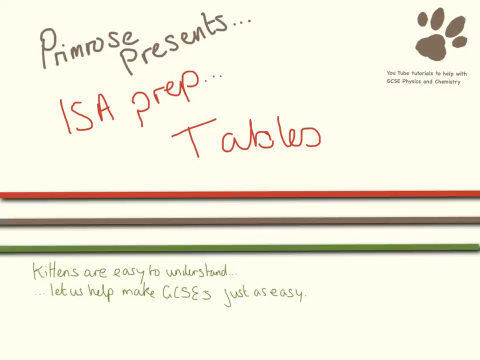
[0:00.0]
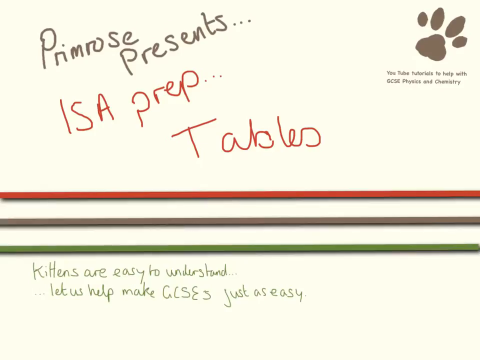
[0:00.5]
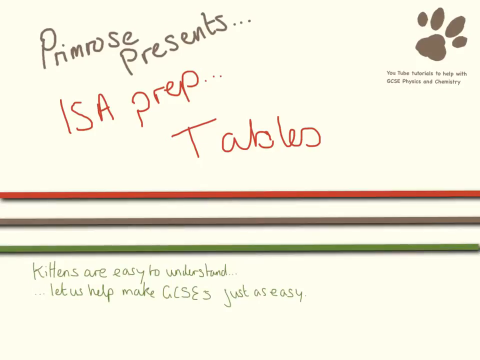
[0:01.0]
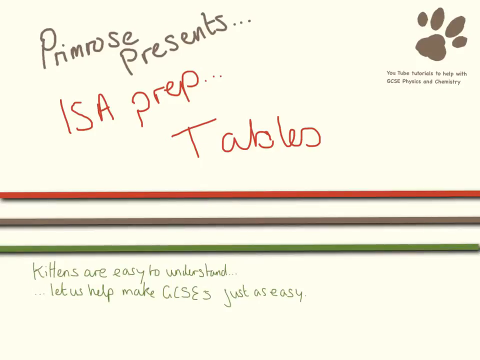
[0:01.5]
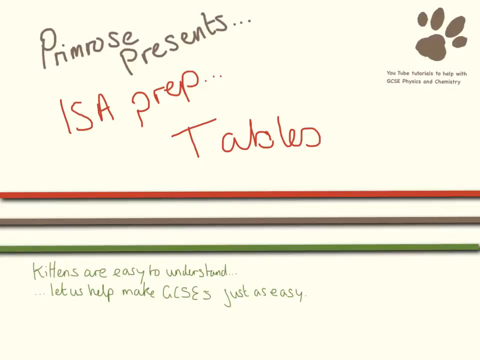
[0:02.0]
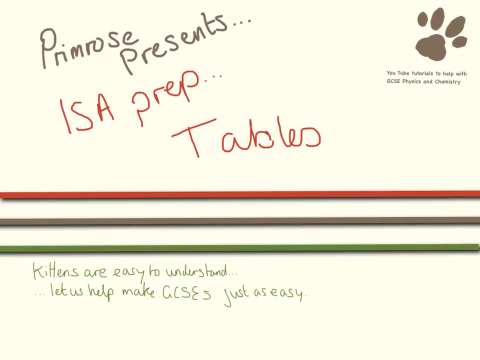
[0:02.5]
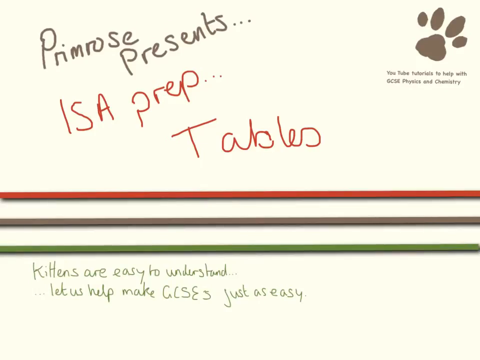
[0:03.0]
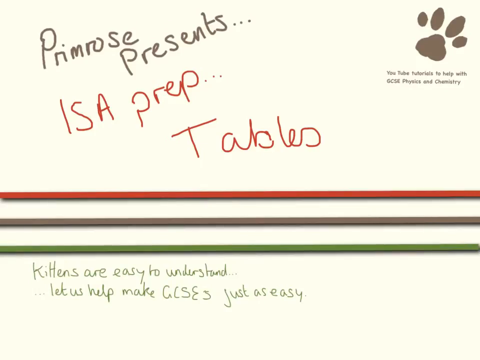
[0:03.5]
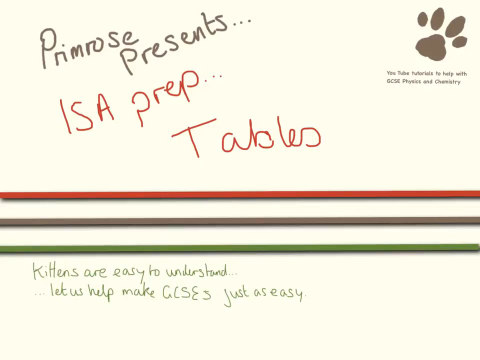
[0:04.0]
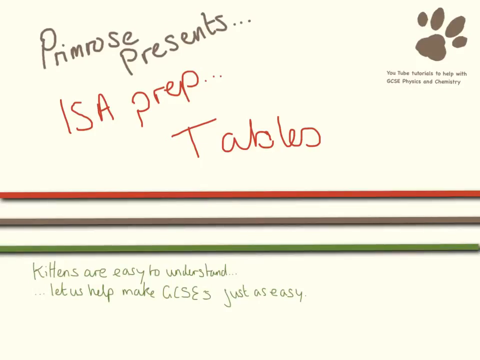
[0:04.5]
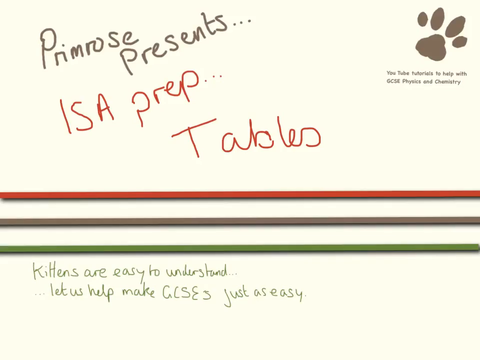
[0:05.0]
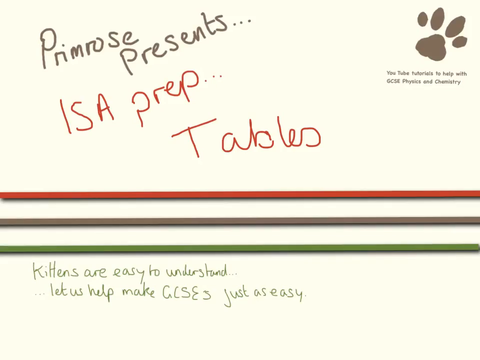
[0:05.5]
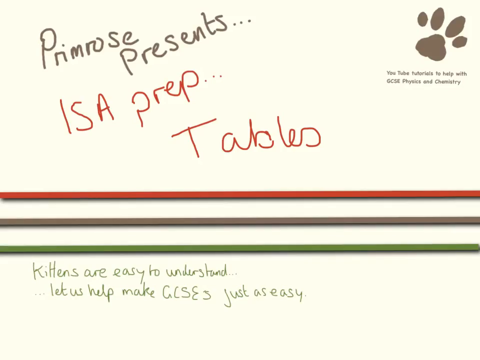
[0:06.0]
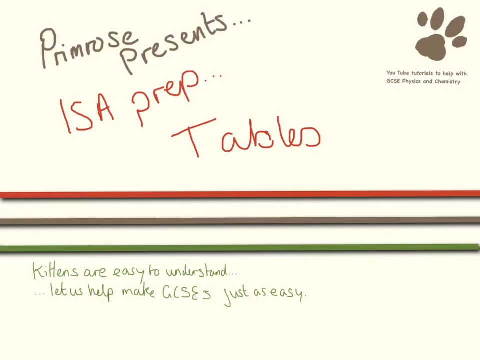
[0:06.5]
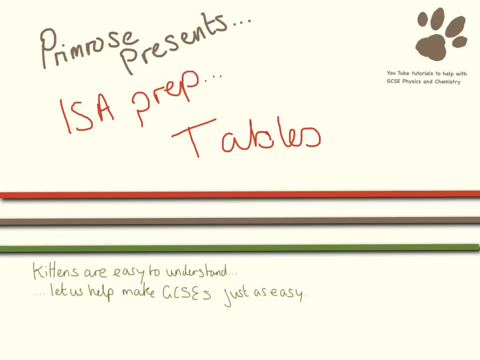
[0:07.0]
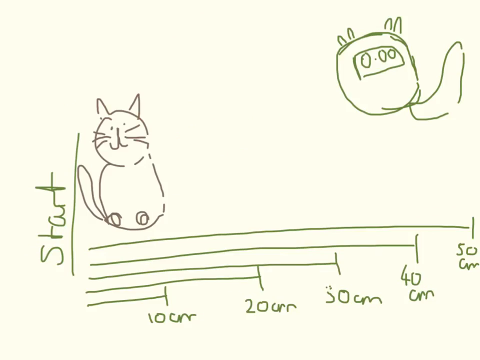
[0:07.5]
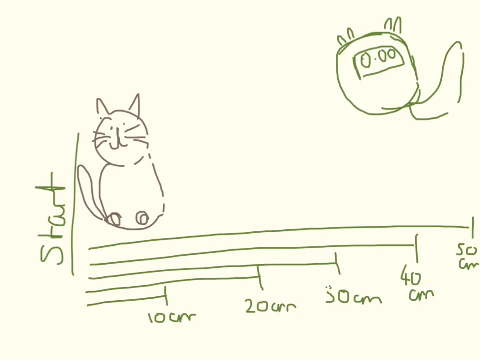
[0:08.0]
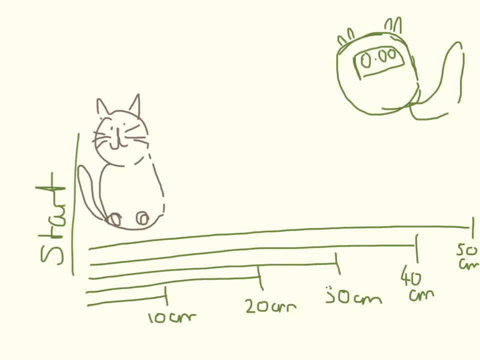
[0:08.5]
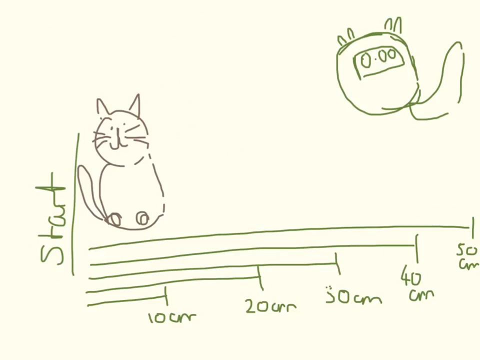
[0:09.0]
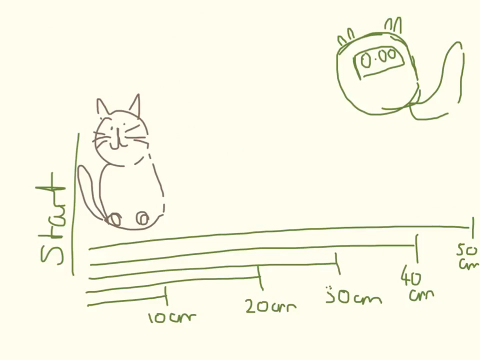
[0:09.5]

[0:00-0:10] A yellow background shows brown and red text reading "primrose presents is a prep tables," a brown dog print, and brown text reading "youtube tutorials to help with GCSE physics and chemistry." There is also a long red, brown and green line with green text reading "kittens are easy to understand let us help make GCSEs just as easy." The video then moves to a yellow background with a drawing of a gray cat and another drawing in green at the top right corner, with text reading "start" and five lines labeled "10 centimeter," "20 centimeter," "30 centimeter," "40 centimeter" and "50 centimeter."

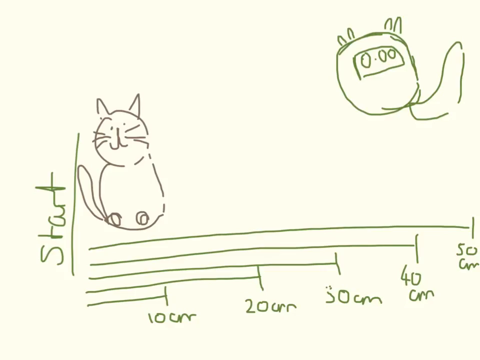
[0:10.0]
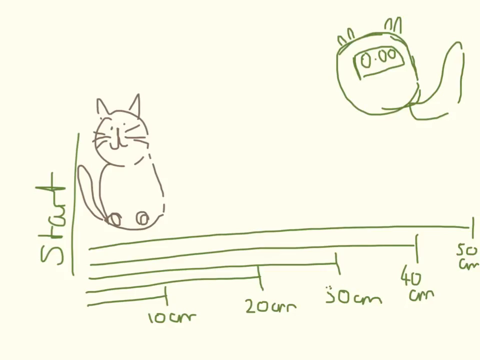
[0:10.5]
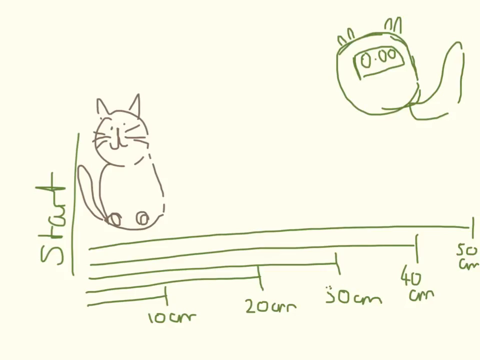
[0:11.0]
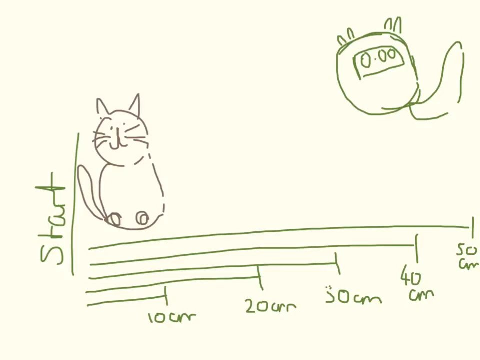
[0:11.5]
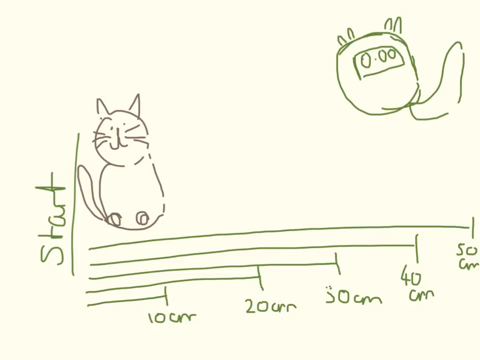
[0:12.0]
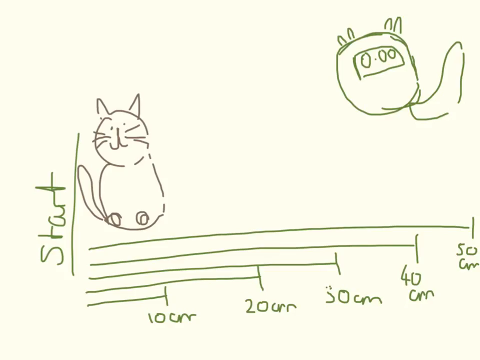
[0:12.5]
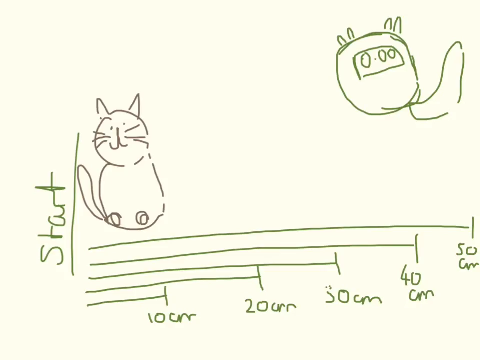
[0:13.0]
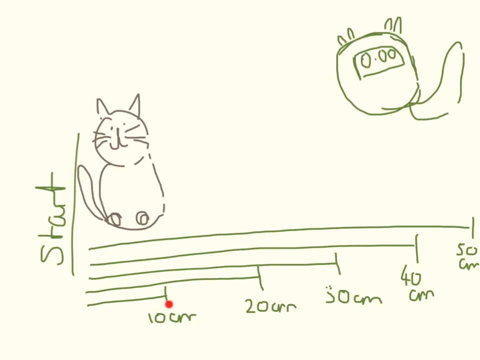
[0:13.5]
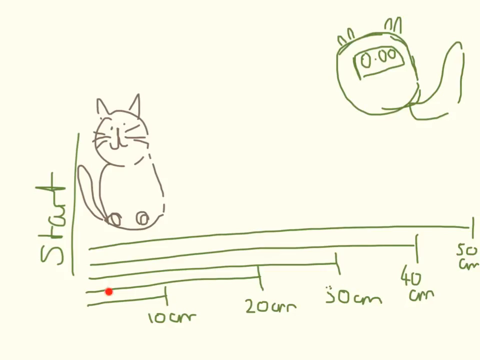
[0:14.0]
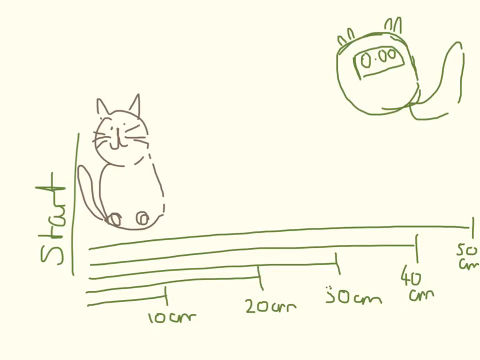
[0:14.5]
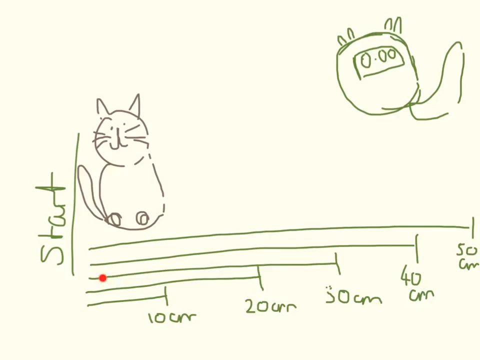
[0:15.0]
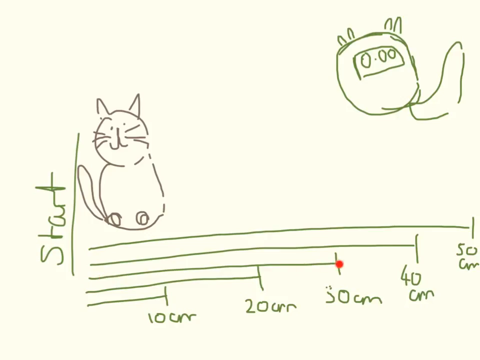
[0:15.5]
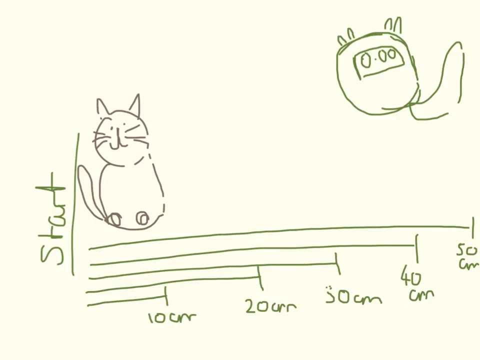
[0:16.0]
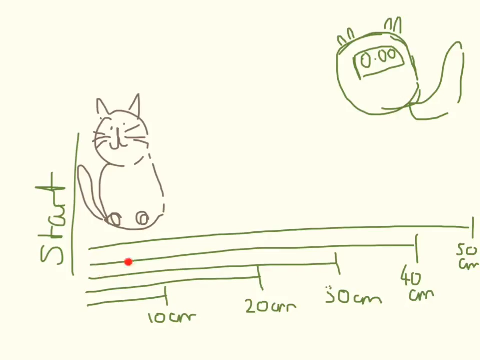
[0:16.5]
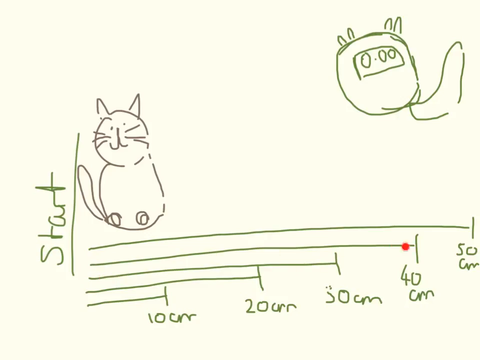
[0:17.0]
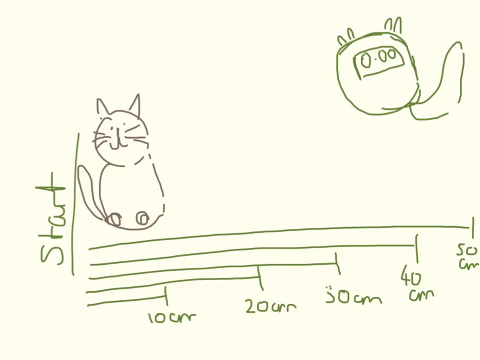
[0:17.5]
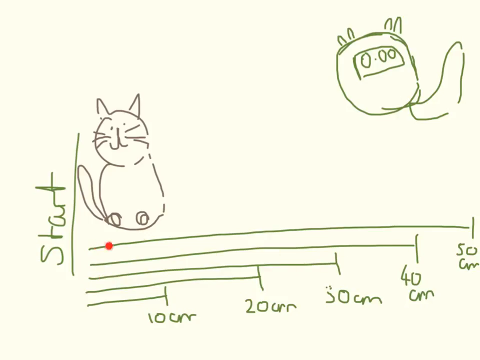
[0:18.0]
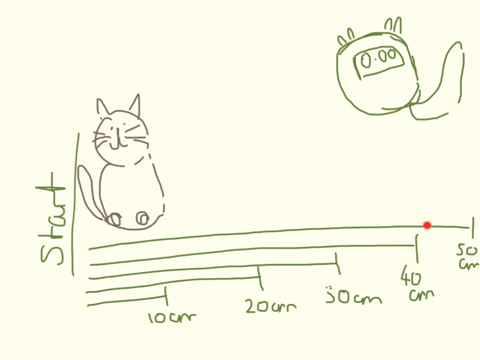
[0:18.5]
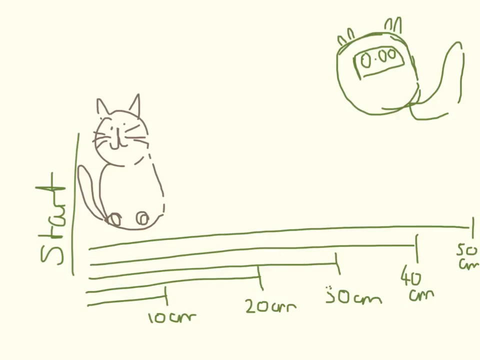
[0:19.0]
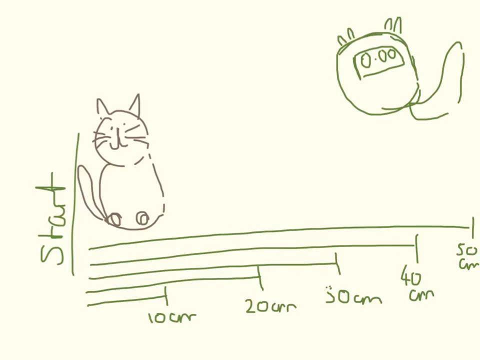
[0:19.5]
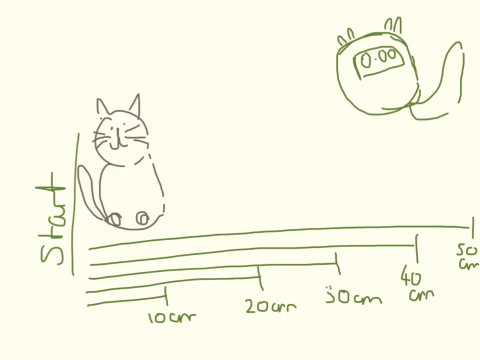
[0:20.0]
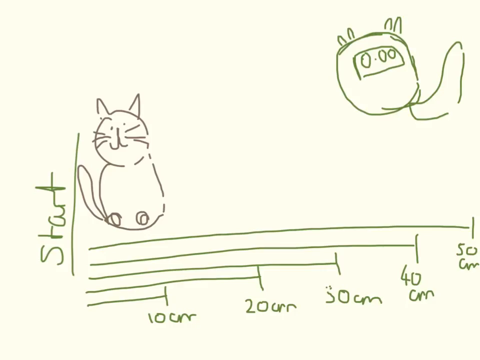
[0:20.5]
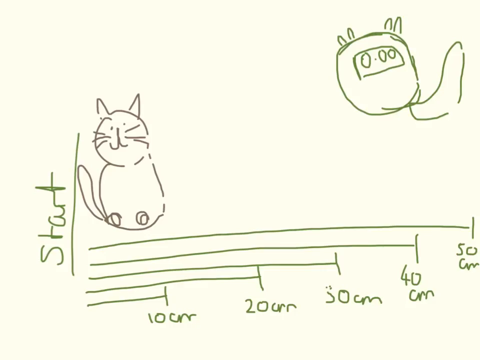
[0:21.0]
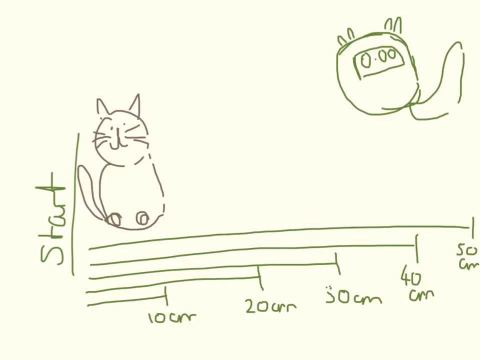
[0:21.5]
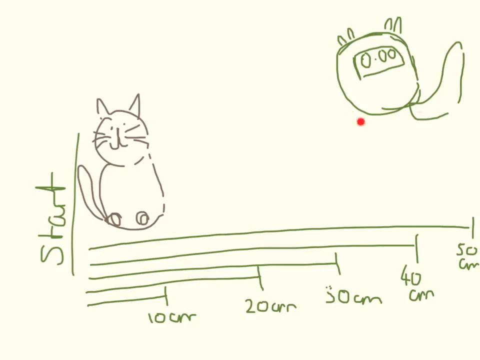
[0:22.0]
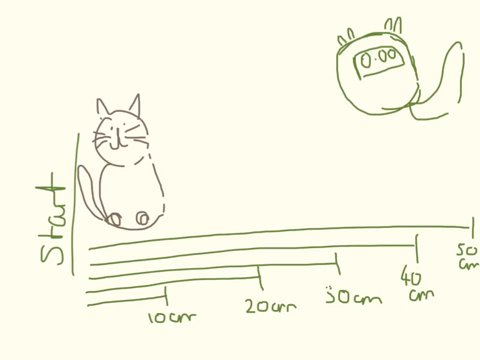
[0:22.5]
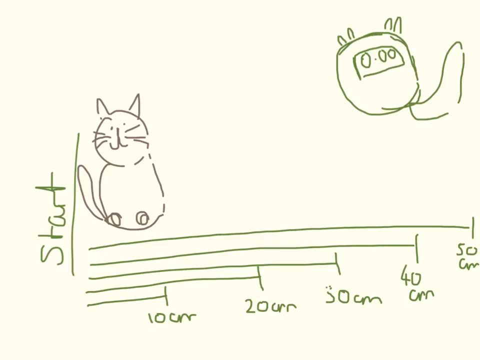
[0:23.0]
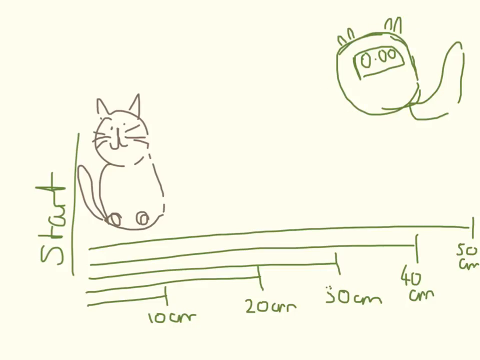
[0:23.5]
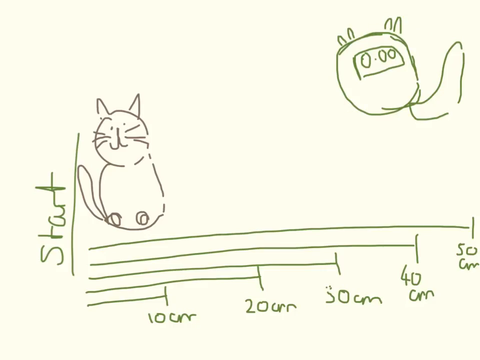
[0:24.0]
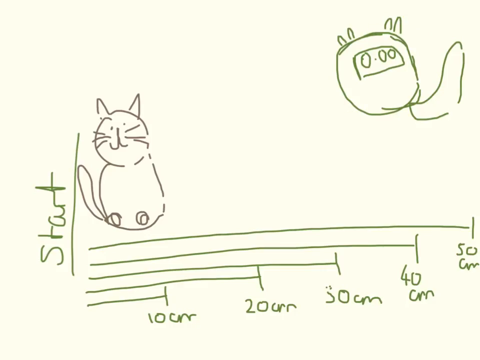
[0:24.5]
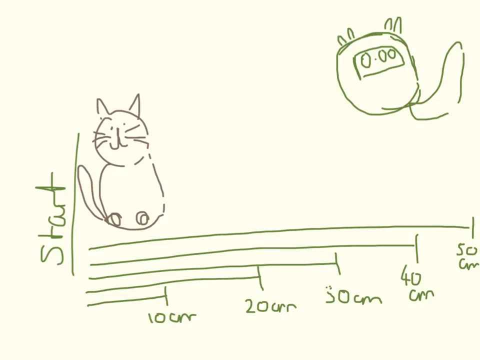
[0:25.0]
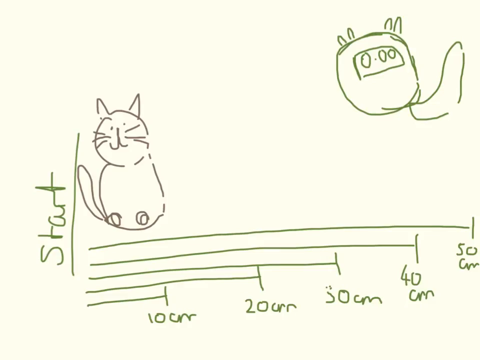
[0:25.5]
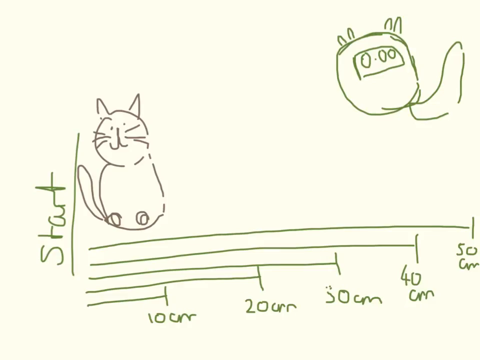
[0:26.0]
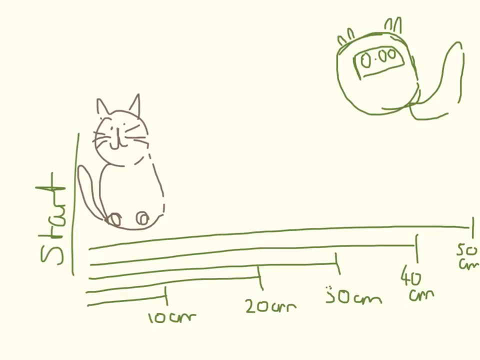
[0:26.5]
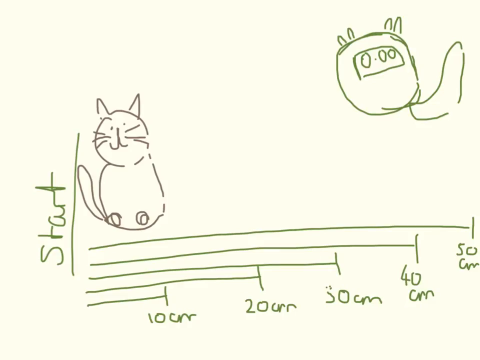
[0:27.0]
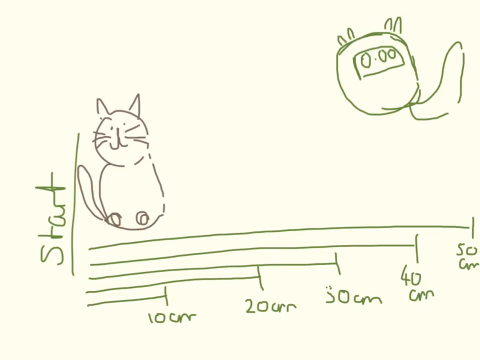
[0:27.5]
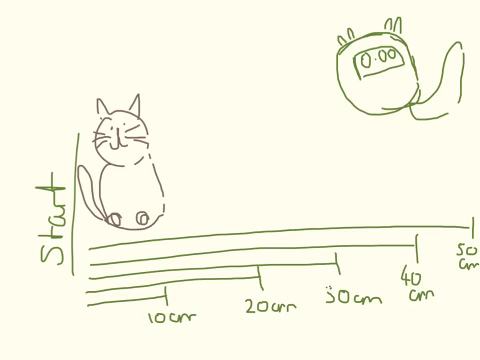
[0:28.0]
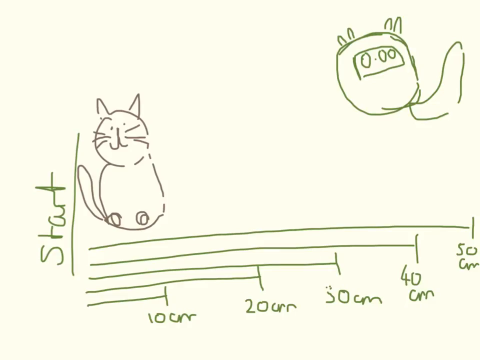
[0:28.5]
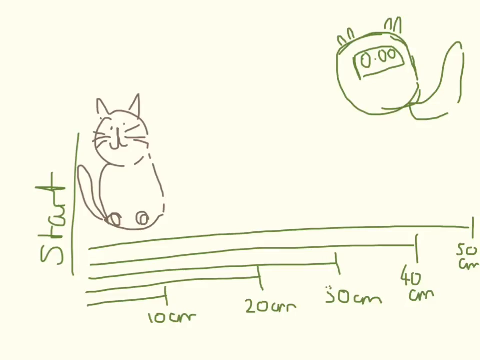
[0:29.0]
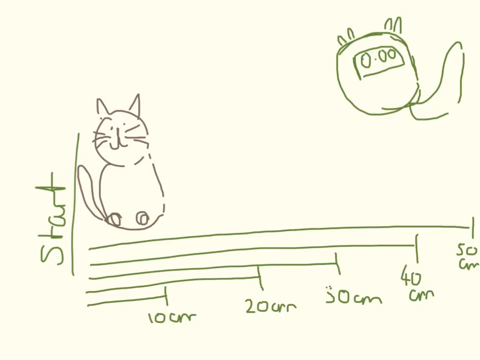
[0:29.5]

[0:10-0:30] On a yellow background, a drawn gray cat is at the bottom of the screen and a drawn green design is at the top right corner. Green text reads "start," and five green lines are labeled "10 centimeters," "20 centimeters," "30 centimeters," "40 centimeters" and "50 centimeters." A little red circle is moved up the 10cm, 20cm, 30cm, 40cm and 50cm lines, then circles around the little drawing at the right corner. The drawings are somewhat sloppy, with gaps at the edges where some lines should be. The "start" text looks like it is in cursive, and the drawing at the top right corner looks like some kind of pod.